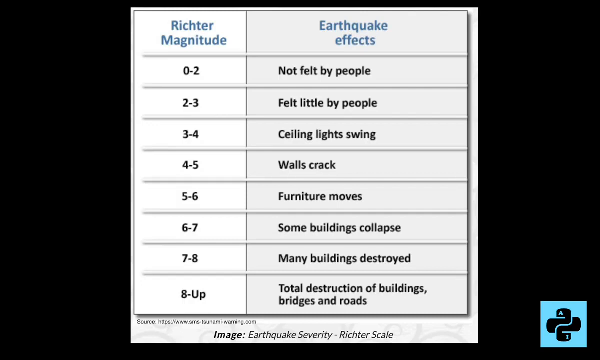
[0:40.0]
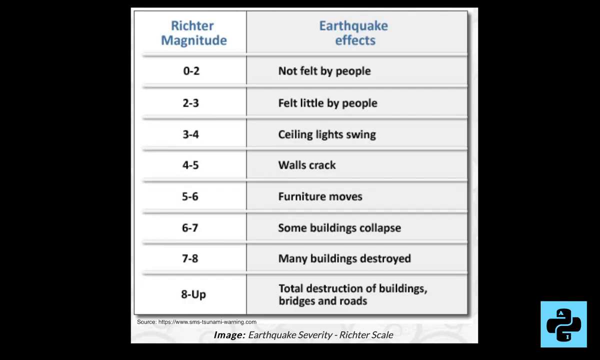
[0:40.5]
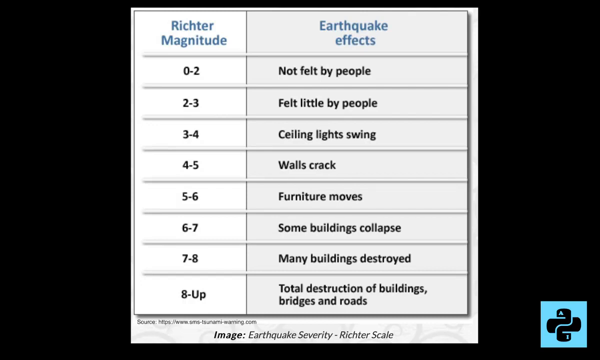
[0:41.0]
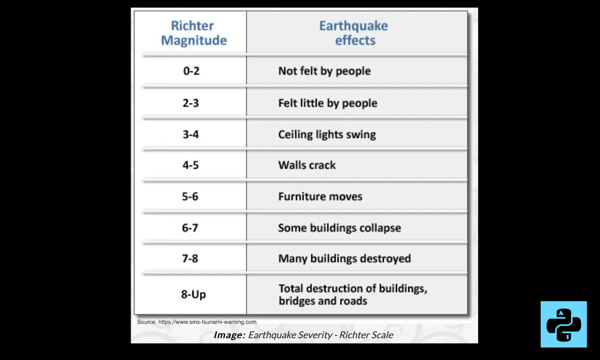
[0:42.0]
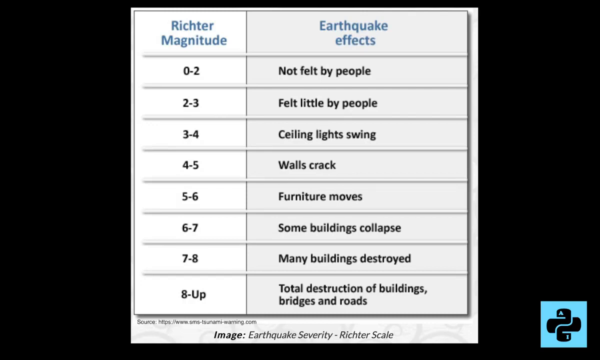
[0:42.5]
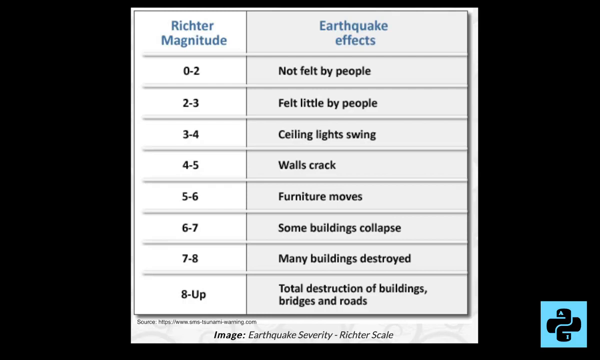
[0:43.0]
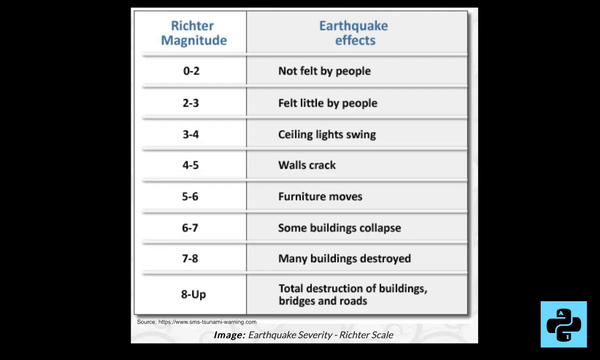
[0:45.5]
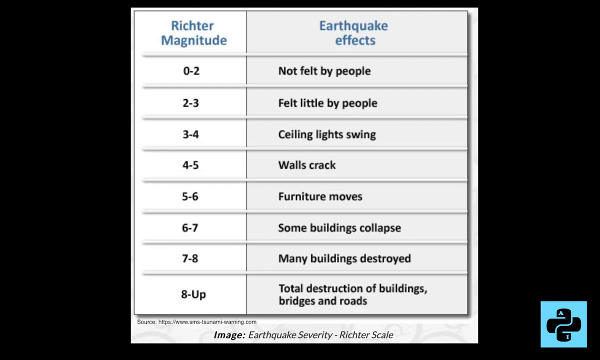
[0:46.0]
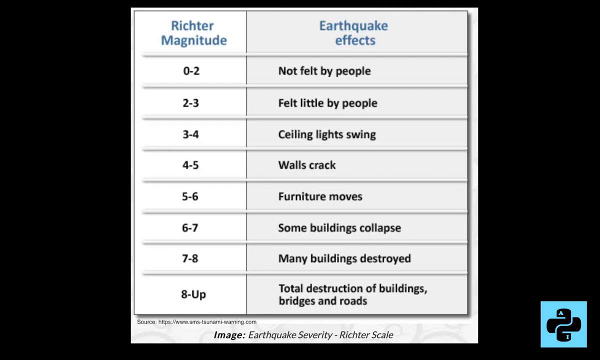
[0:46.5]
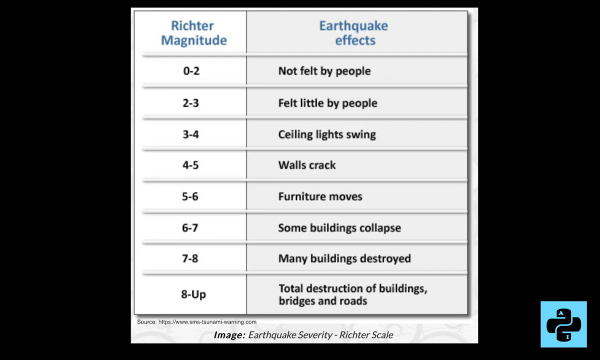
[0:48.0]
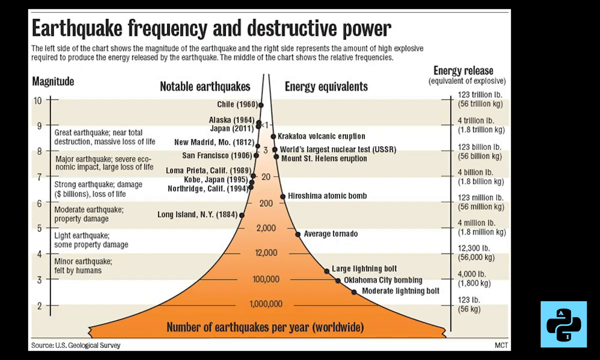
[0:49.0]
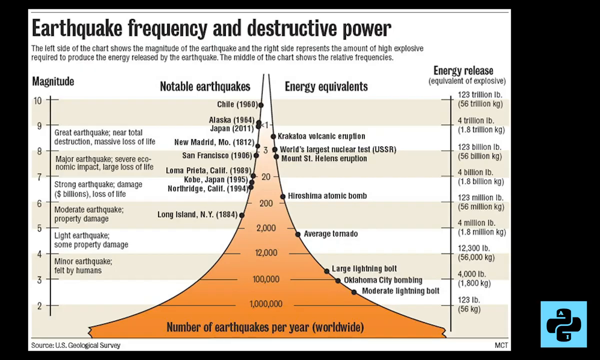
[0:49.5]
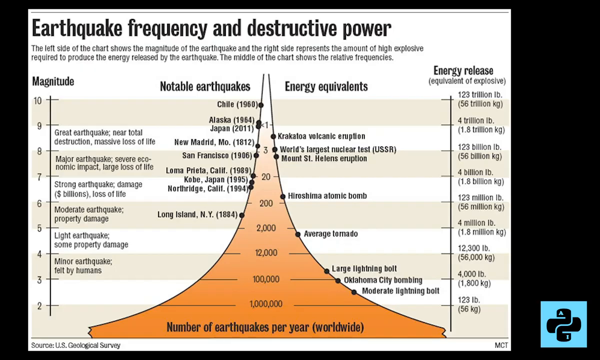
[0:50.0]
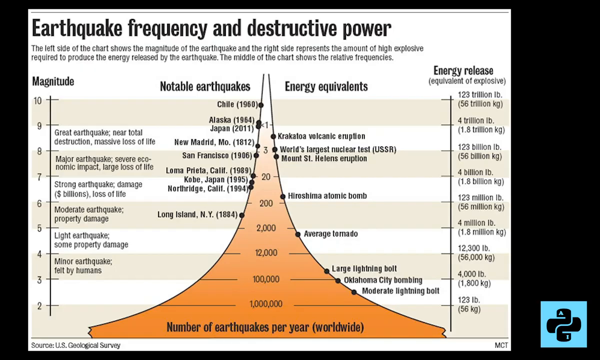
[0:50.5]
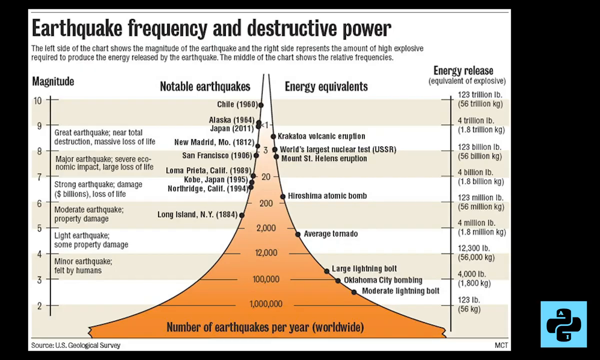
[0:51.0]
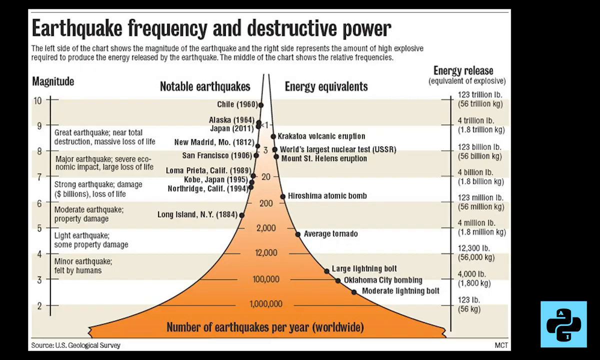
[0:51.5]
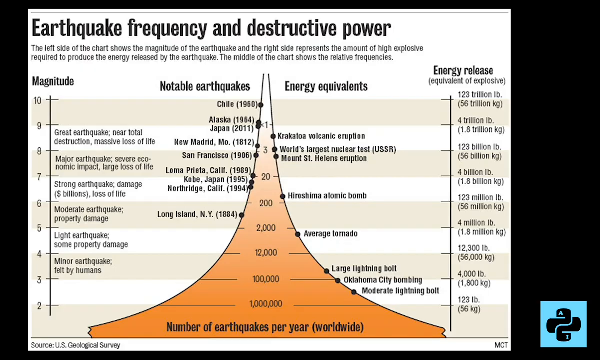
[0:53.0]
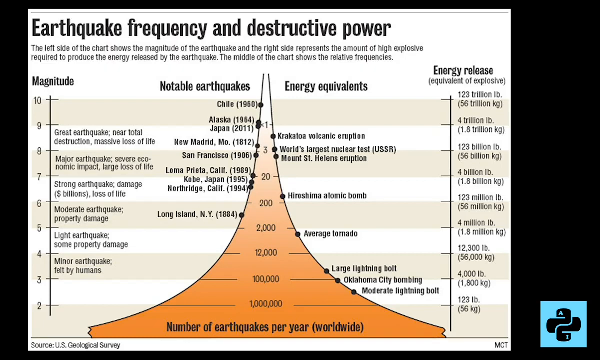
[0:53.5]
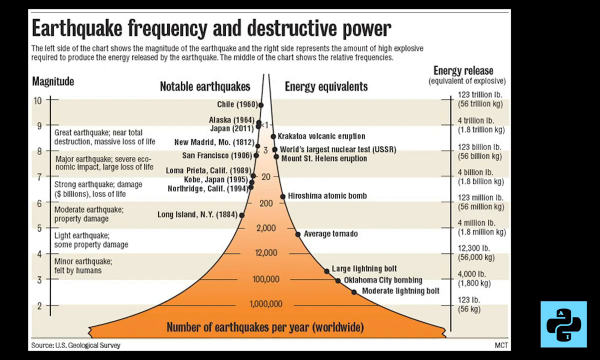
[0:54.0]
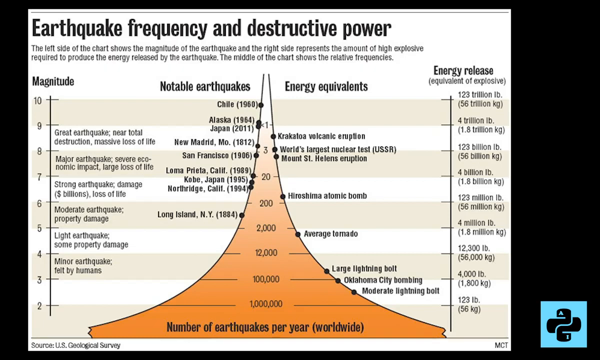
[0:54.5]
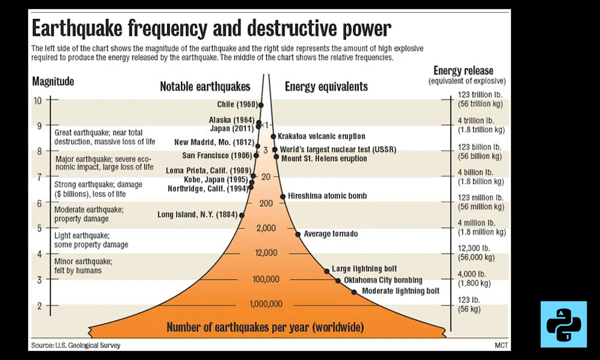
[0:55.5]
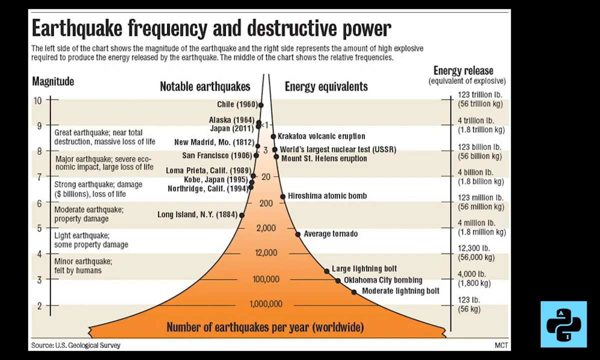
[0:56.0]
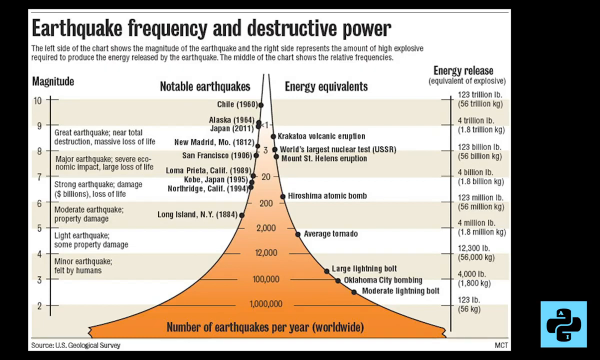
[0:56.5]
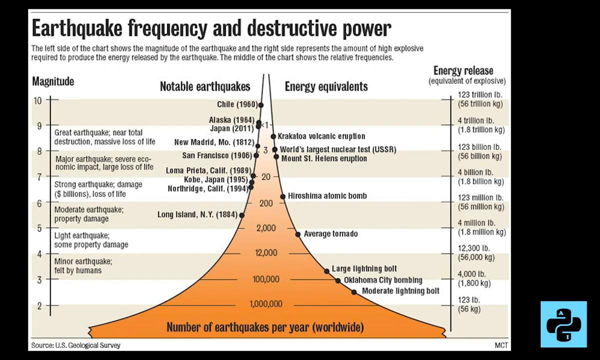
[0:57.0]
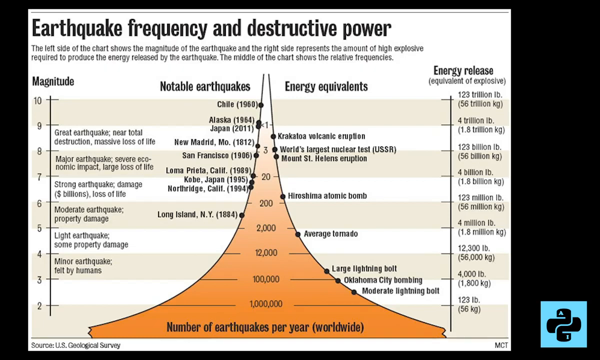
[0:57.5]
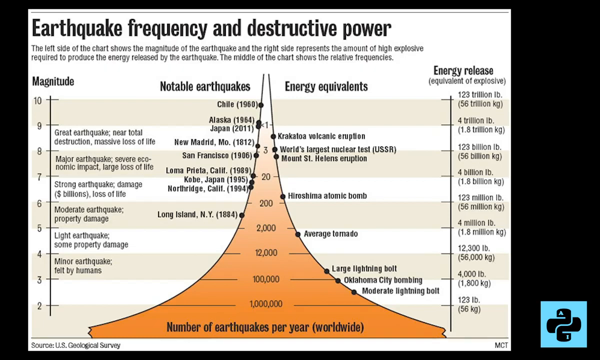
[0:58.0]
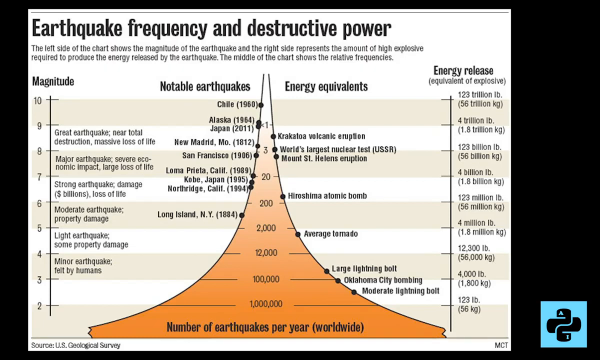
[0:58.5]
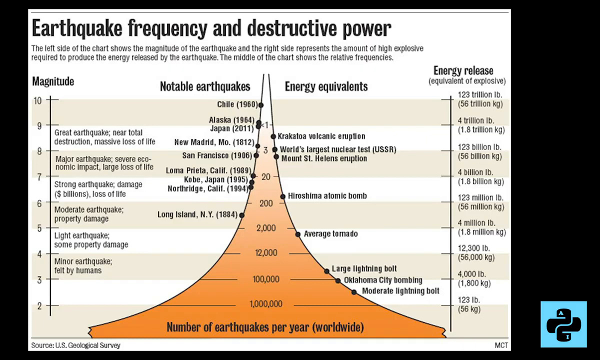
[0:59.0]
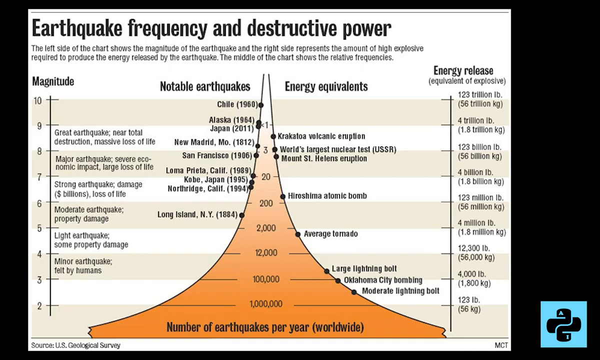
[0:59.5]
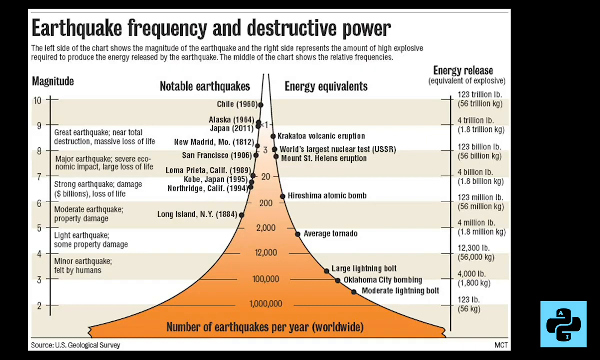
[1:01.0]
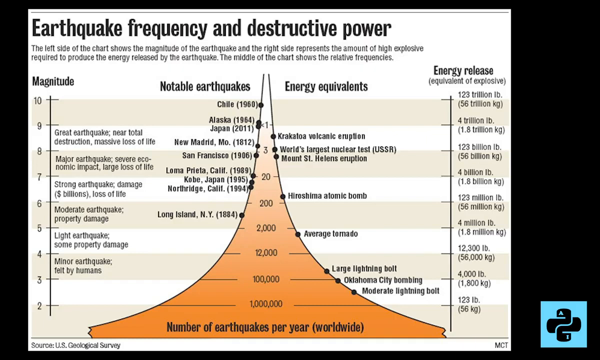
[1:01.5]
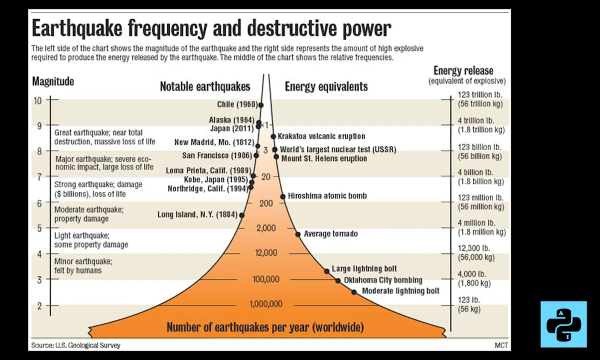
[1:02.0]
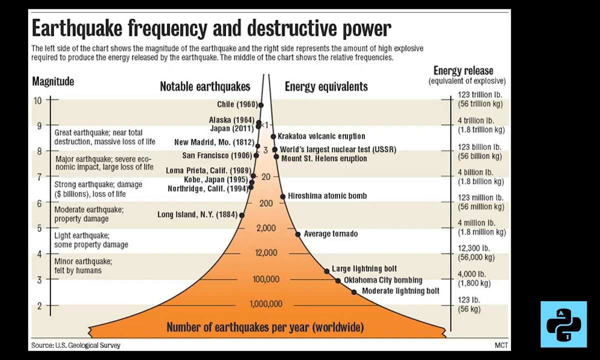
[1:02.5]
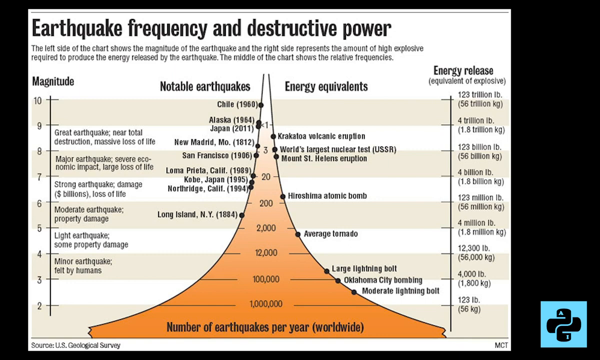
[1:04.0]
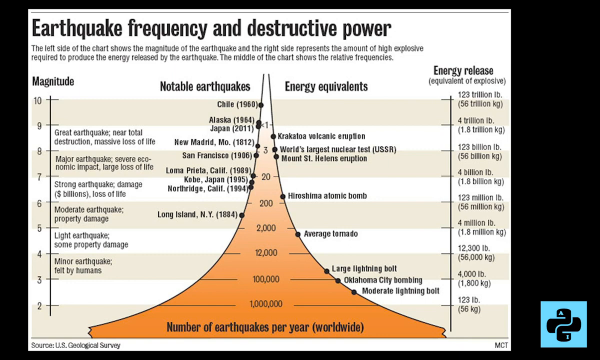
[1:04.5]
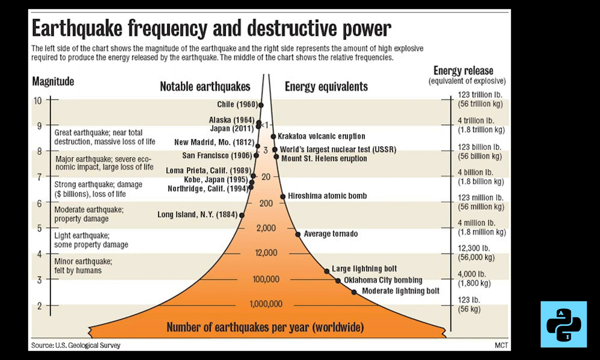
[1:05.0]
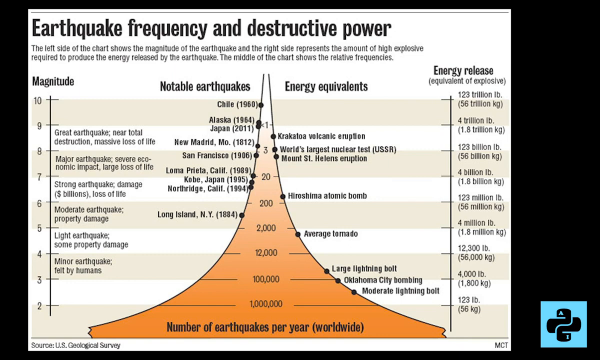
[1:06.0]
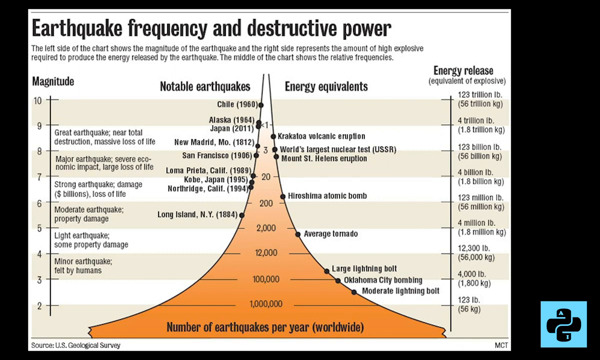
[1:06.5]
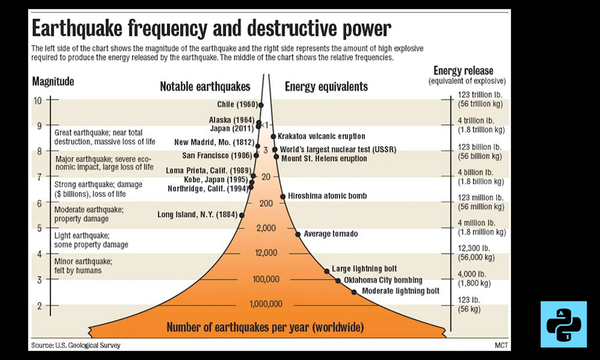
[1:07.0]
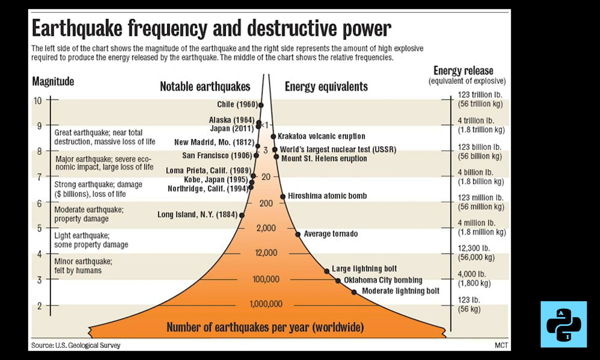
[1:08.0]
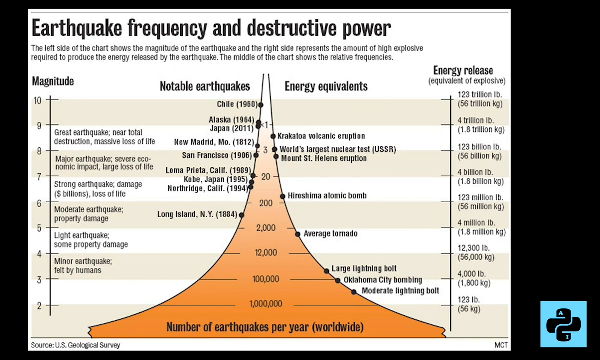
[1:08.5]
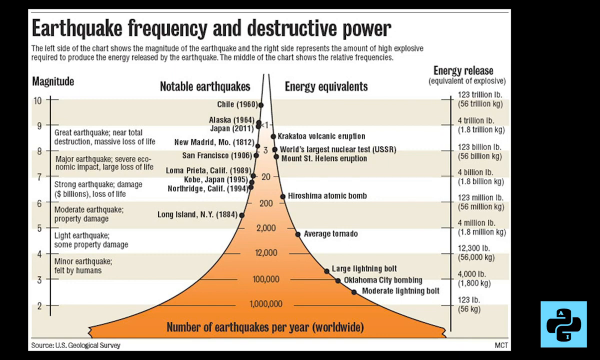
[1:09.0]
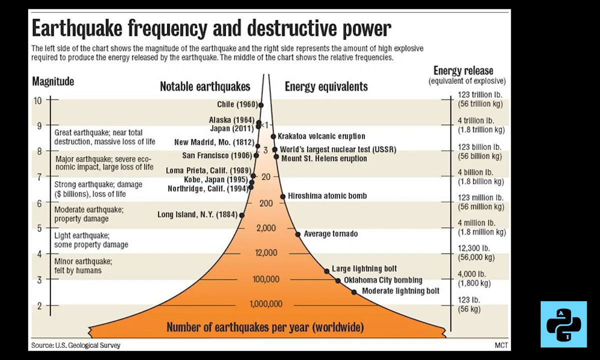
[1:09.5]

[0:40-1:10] A table with a white background has titles in blue text: "Richter magnitude" in the left-hand column and "earthquake effects" in the right-hand column. The earthquake effects column takes up about two-thirds of the table's width and the Richter magnitude column about one-third. The rows read: 0 to 2, "not felt by people"; 2 to 3, "felt little by people"; 3 to 4, "ceiling lights swing"; 4 to 5, "walls crack"; 5 to 6, "furniture moves"; 6 to 7, "some buildings collapse"; 7 to 8, "many buildings collapse"; 8 and up, "total destruction of buildings, bridges and roads". Next, a slide reads "earthquake frequency and destructive power" and shows a graph or graphic of the power of earthquakes, with "magnitude" on the left side and "energy release" on the right side. In the center, a shape starts at the bottom as kind of a wide-based orange form, not really triangular, with lines that curve inward and upward and nearly intersect without ever meeting. The higher up the shape, the lighter its color. About 20 earthquakes are listed on the graphic, and the left side labels how powerful they could be and the type of damage they could do.